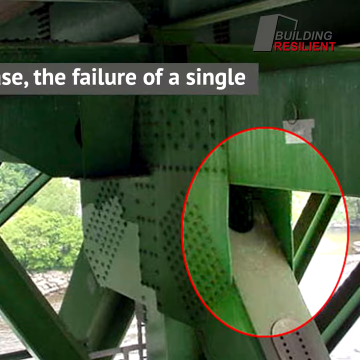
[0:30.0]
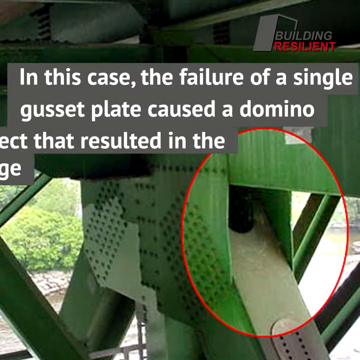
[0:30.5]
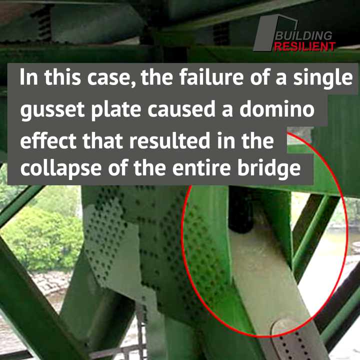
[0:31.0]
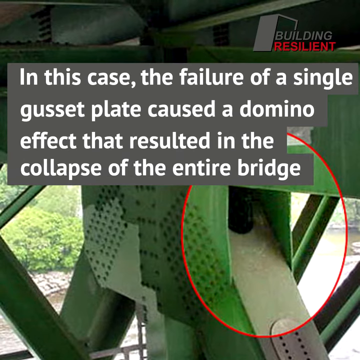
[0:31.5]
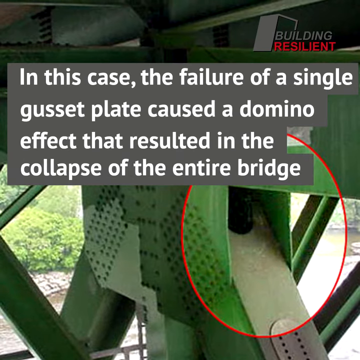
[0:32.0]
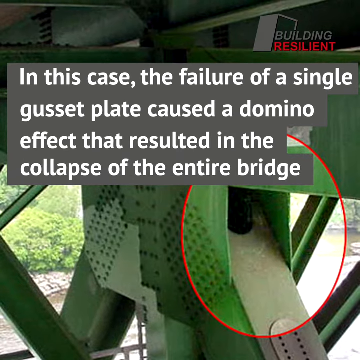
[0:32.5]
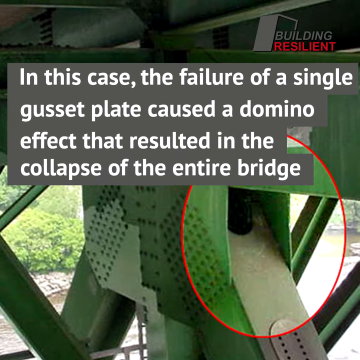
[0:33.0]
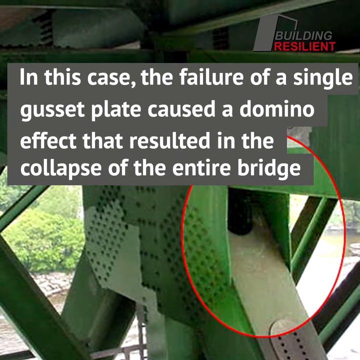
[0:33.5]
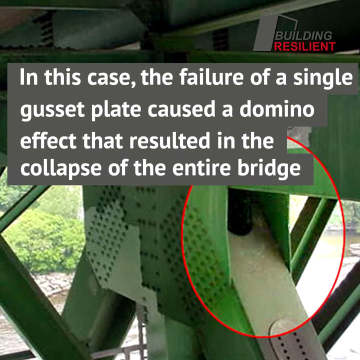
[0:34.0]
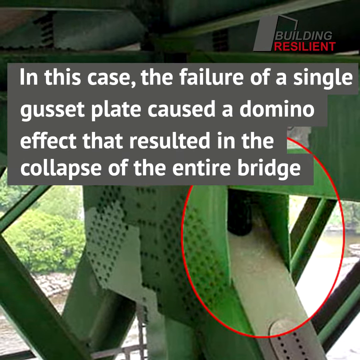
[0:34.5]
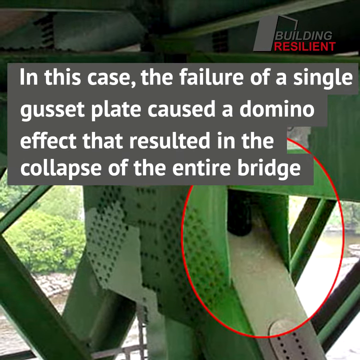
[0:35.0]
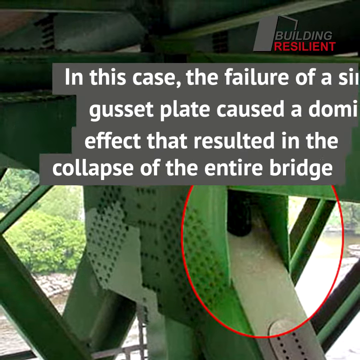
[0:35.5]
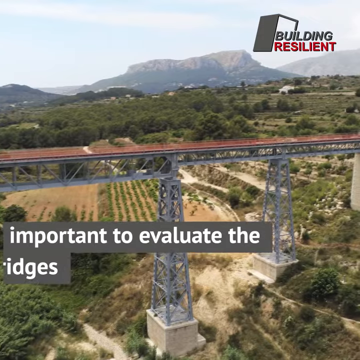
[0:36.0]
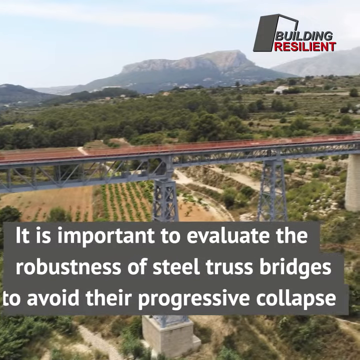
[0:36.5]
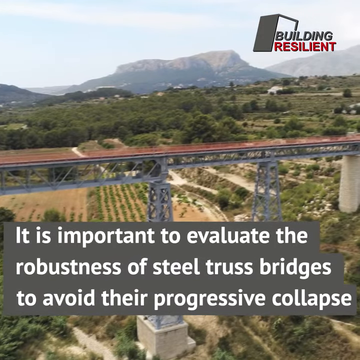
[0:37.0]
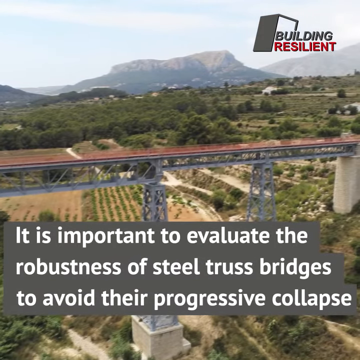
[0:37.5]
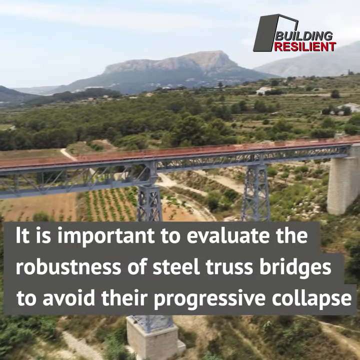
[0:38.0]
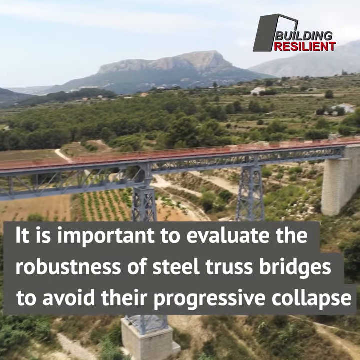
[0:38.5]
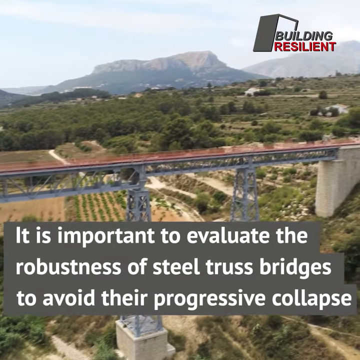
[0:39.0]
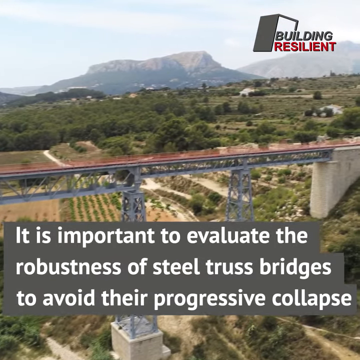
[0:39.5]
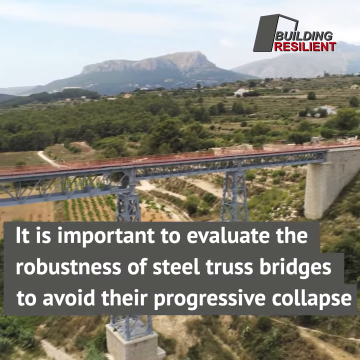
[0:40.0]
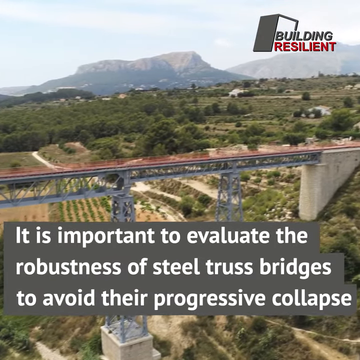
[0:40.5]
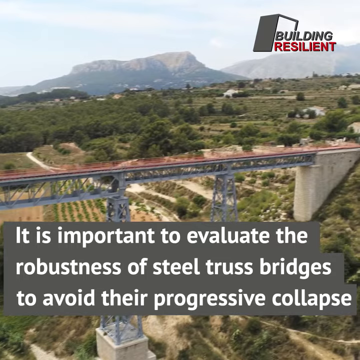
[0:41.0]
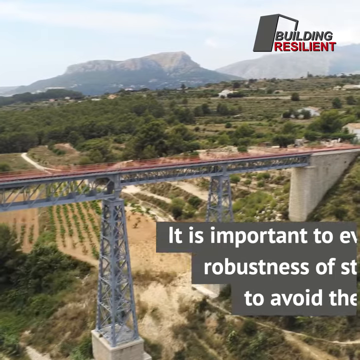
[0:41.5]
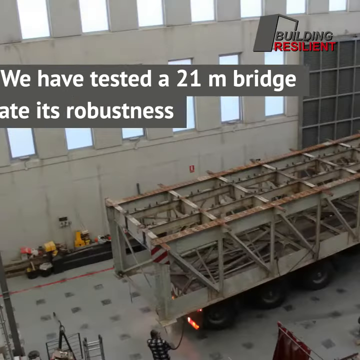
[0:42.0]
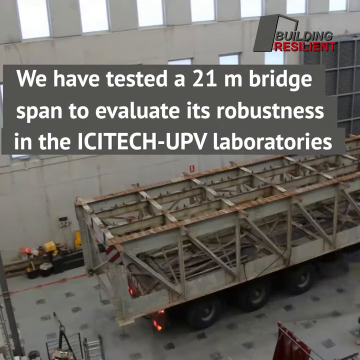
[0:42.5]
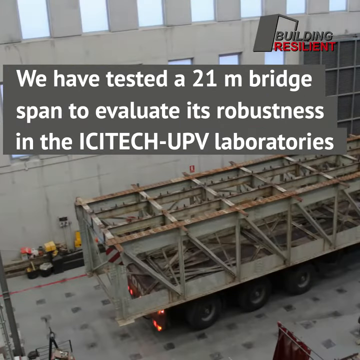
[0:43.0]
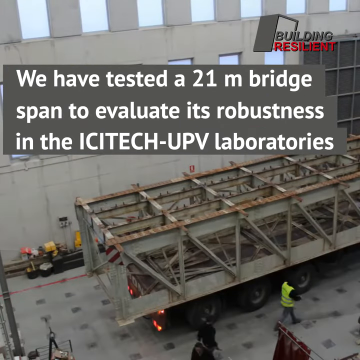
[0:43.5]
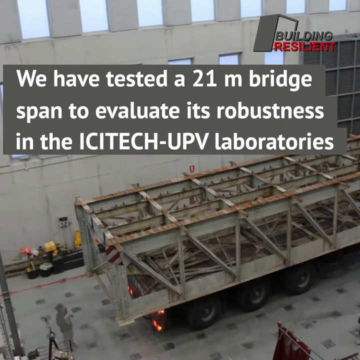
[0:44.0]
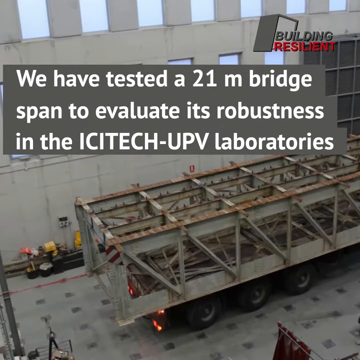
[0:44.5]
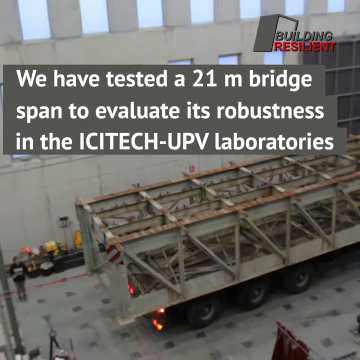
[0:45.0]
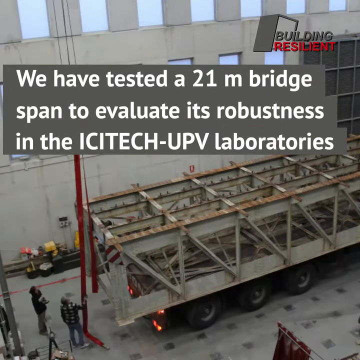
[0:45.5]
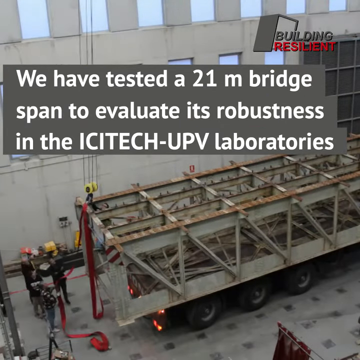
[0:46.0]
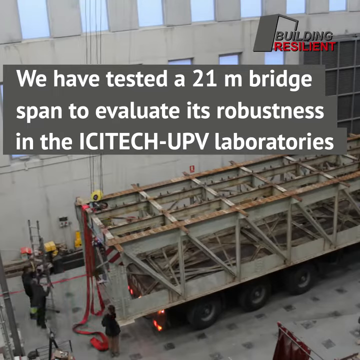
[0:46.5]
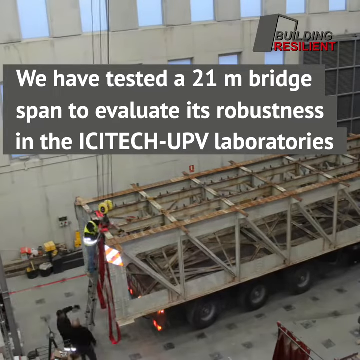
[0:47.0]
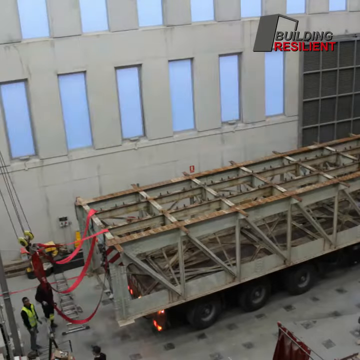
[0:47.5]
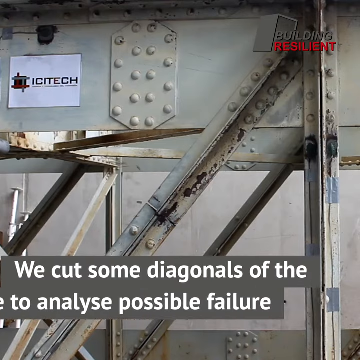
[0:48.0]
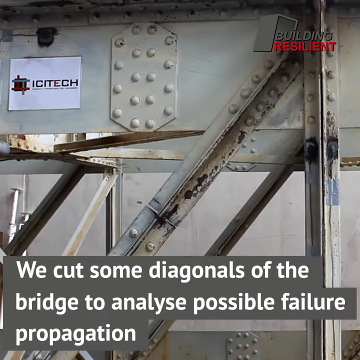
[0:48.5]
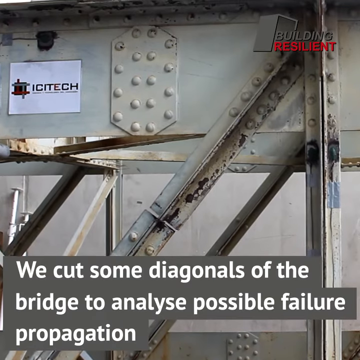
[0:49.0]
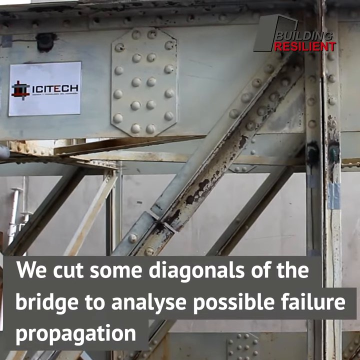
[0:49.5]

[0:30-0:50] The undercarriage of a bridge is shown; it appears to be metal painted a light green color. The words "building resilient" are in the upper right corner, and beneath them, toward the middle of the frame, white text on a silver background reads "in this case, the failure of a single gusset plate caused a domino effect that resulted in the collapse of the entire bridge". Next, a large bridge goes over a city, with a mountain in the background. It seems to be a bright, sunny day, with a few clouds in the sky and a large area of trees. Toward the bottom, white text on a silver background reads "it is important to evaluate the robustness of steel truss bridges to avoid their progressive collapse".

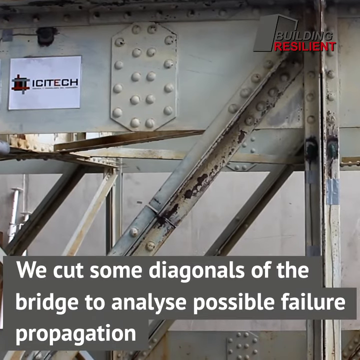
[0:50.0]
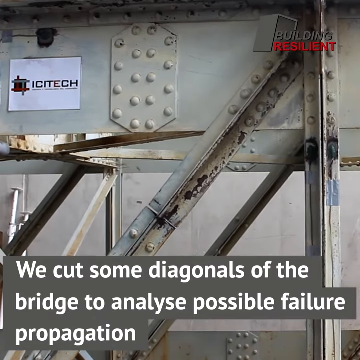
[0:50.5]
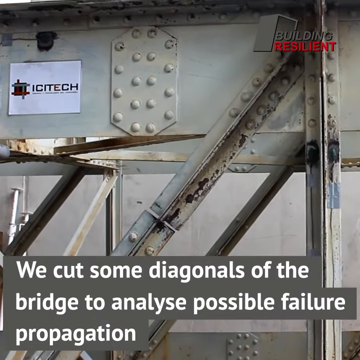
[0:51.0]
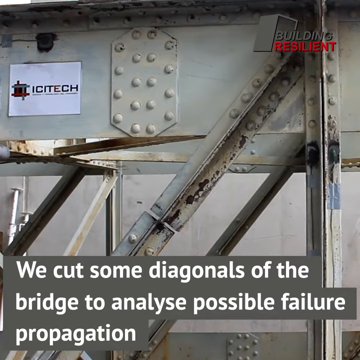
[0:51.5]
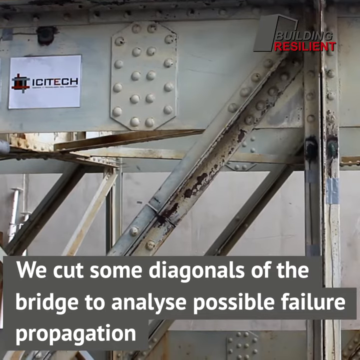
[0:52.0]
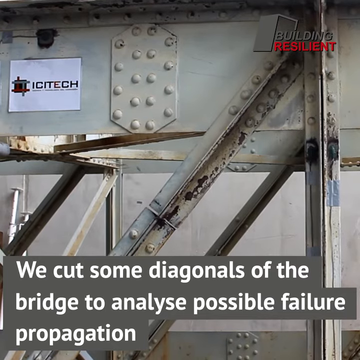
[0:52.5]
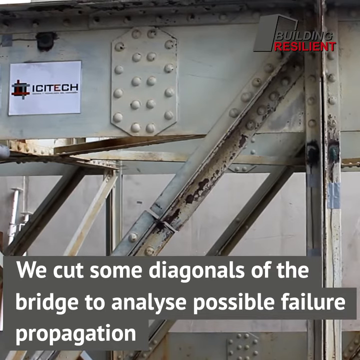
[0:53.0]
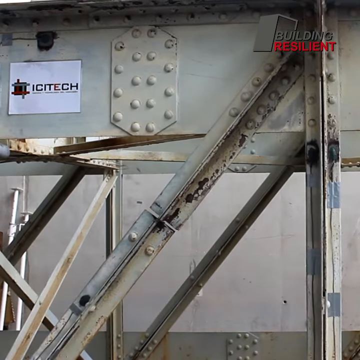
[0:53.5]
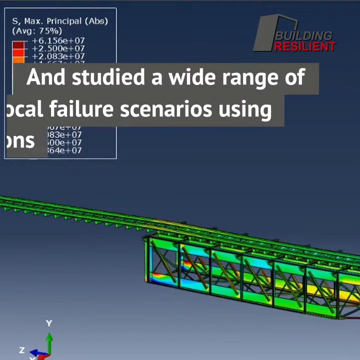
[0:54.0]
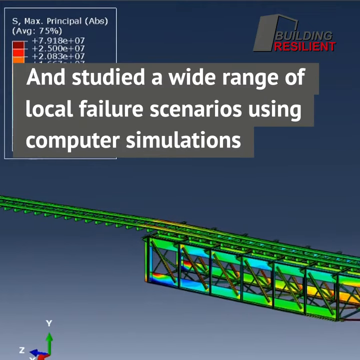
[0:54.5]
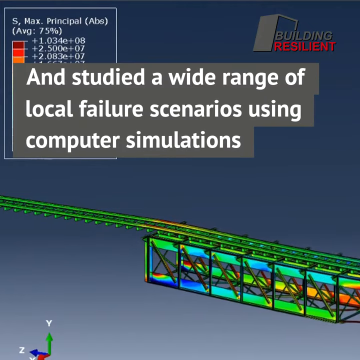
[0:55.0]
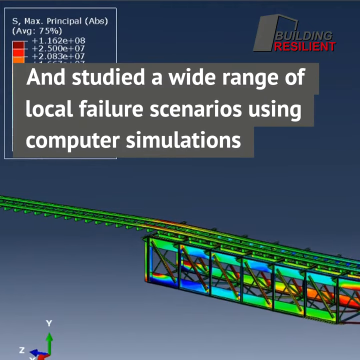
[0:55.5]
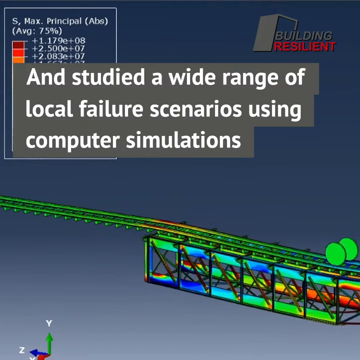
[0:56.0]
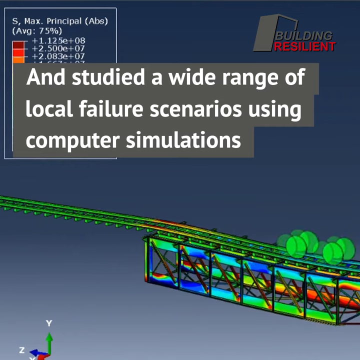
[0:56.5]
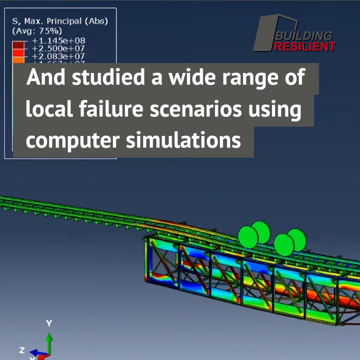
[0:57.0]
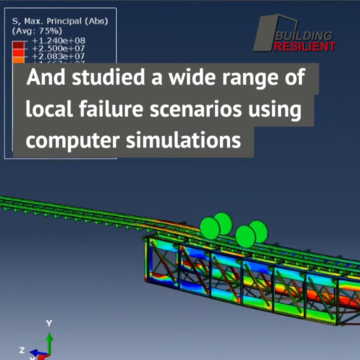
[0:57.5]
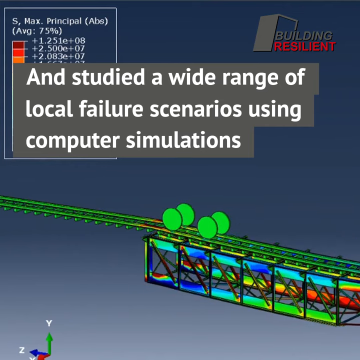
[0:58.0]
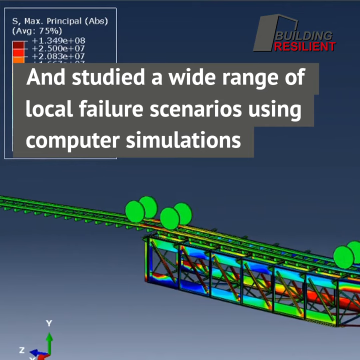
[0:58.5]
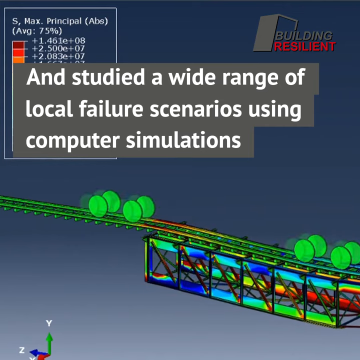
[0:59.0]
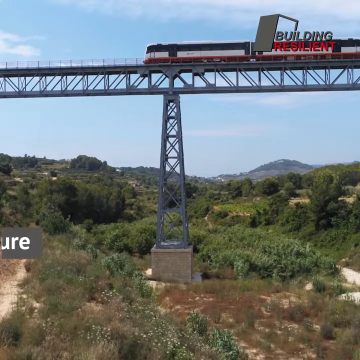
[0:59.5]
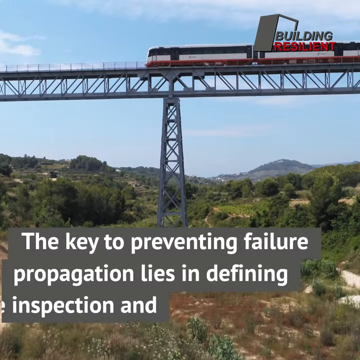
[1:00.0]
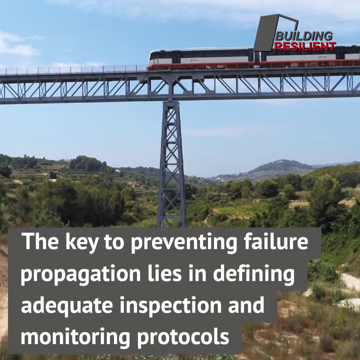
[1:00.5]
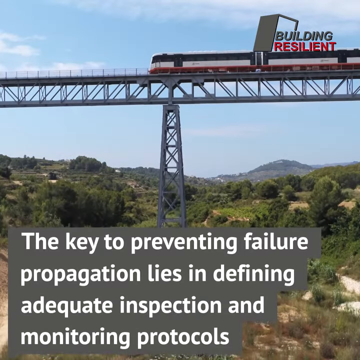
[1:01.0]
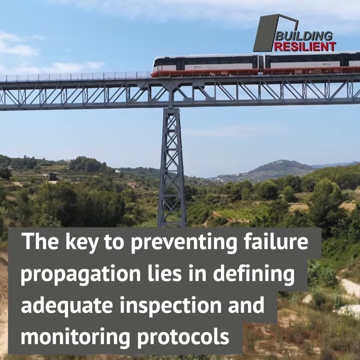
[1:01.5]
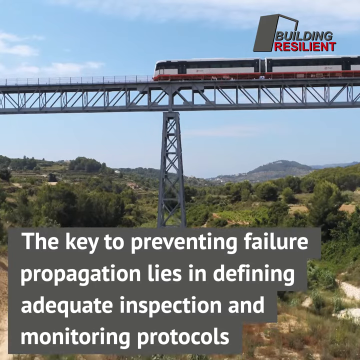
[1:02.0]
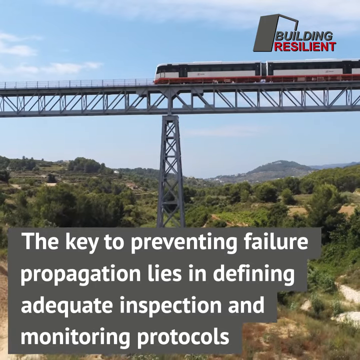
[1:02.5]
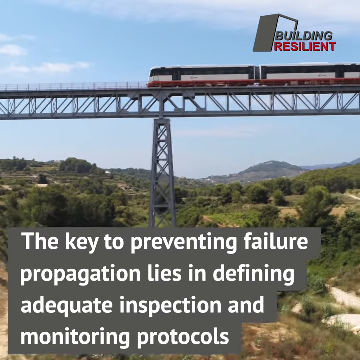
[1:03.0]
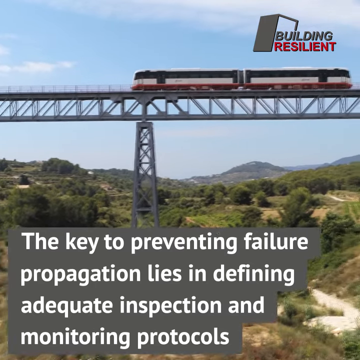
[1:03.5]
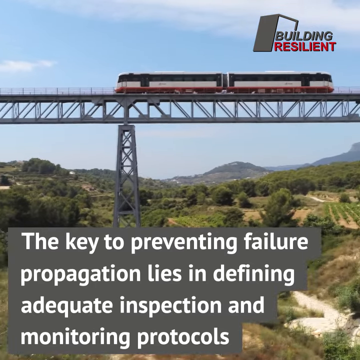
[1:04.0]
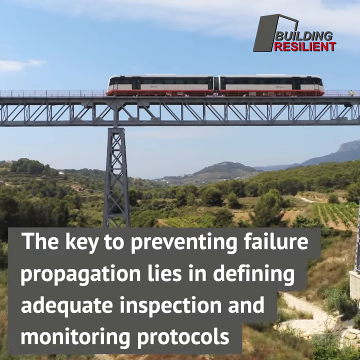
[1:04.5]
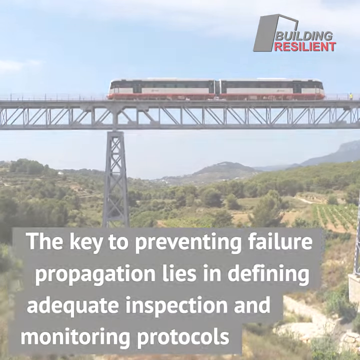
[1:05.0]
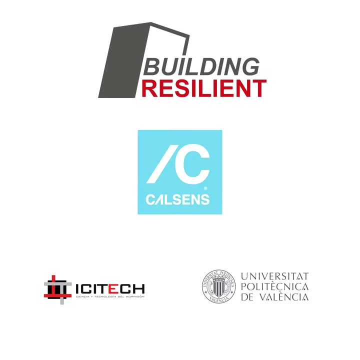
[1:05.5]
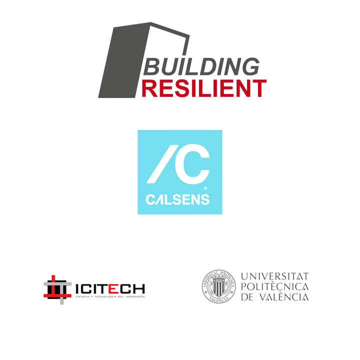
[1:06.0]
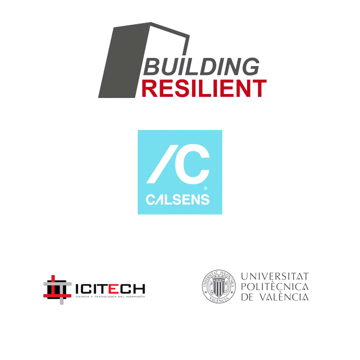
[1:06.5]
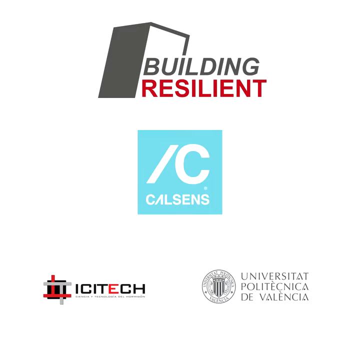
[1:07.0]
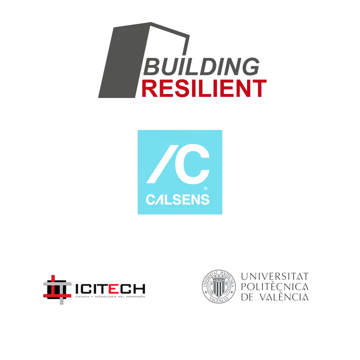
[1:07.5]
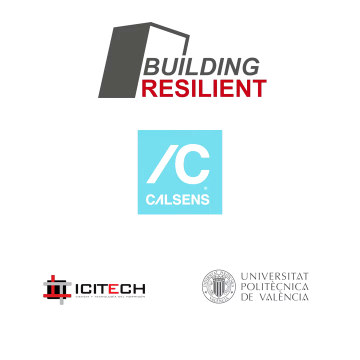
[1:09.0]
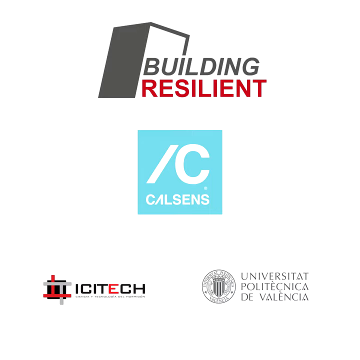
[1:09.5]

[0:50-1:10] What looks like the side or undercarriage of a bridge appears, seemingly metal painted an off-white color. Toward the bottom, white text on a silver background reads "we cut some diagonals of the bridge to analyze possible failure propagation". A graph then pops up in the upper left corner, along with the words "and study the wide range of local failure scenarios using computer simulations" in white on a silver background, and some of the computer simulations roll across the screen. Next, a bridge goes across a large area of land, high up in the air, with a train going across it. Beneath this, white text on a silver background reads "the key to preventing failure propagation lies in defining adequate inspection and monitoring protocols". The train on the bridge then appears to start rolling backwards very slowly. Finally, logos for different companies pop up on the image.